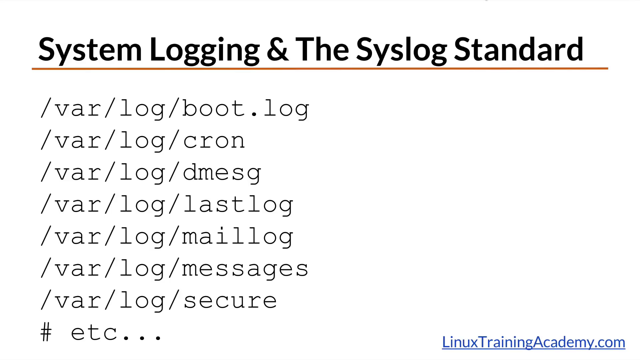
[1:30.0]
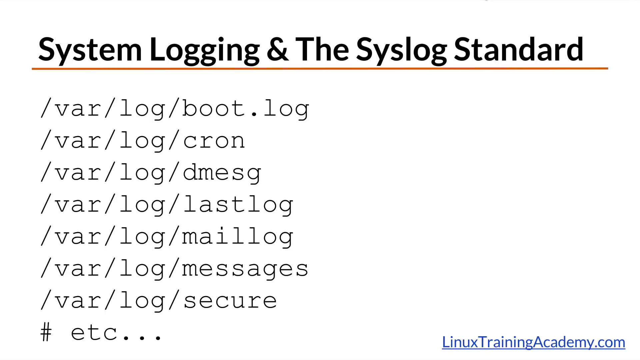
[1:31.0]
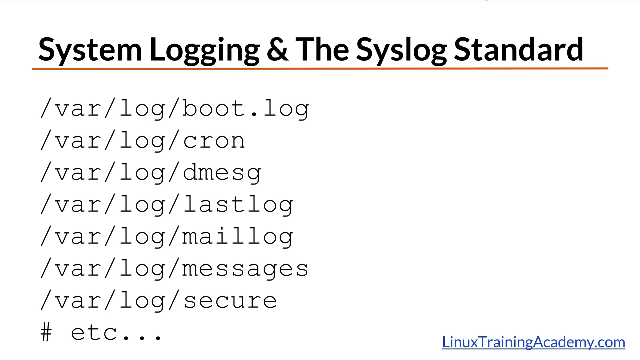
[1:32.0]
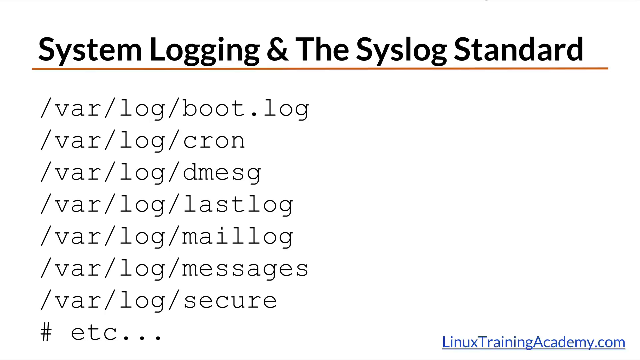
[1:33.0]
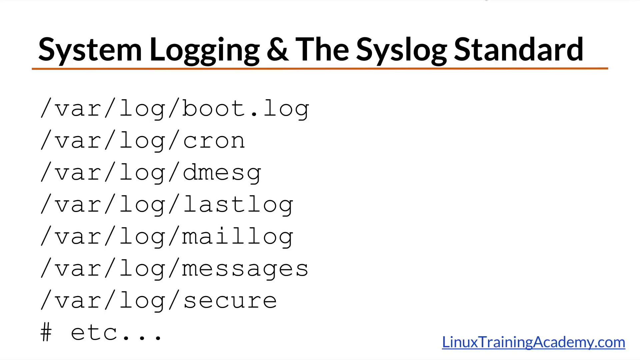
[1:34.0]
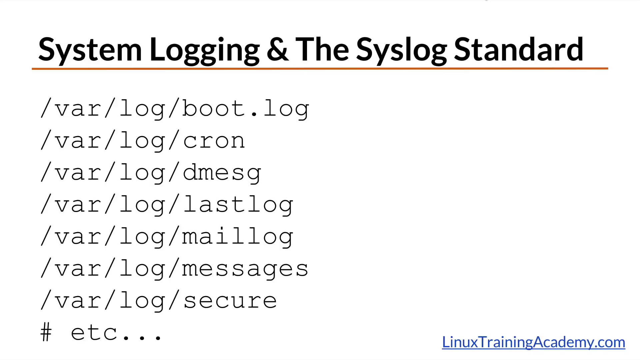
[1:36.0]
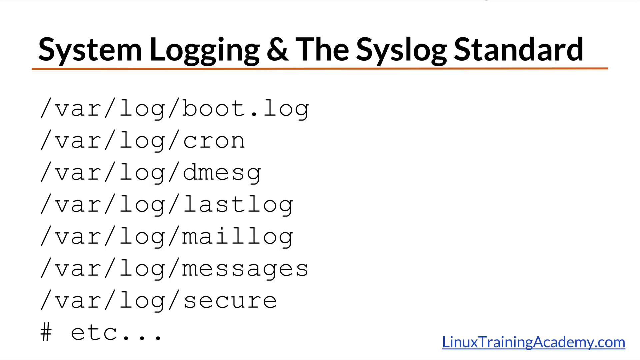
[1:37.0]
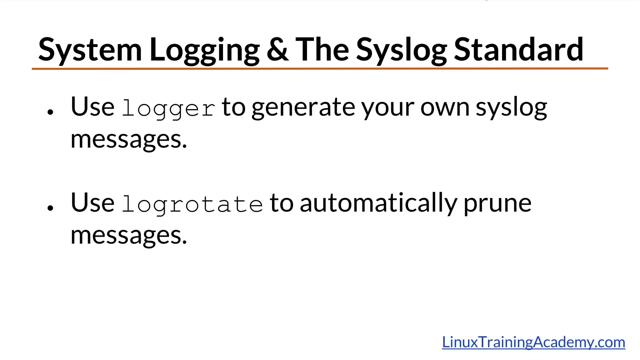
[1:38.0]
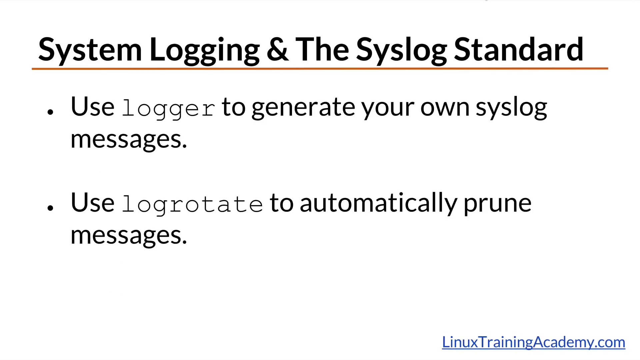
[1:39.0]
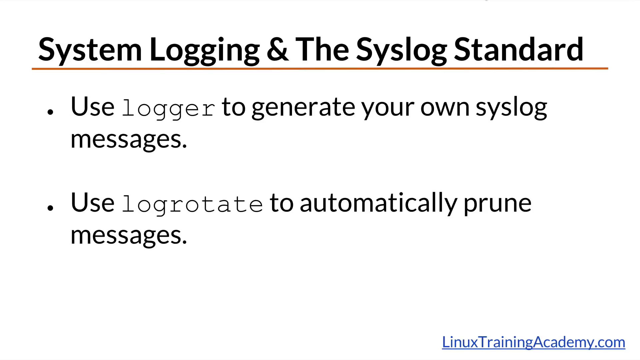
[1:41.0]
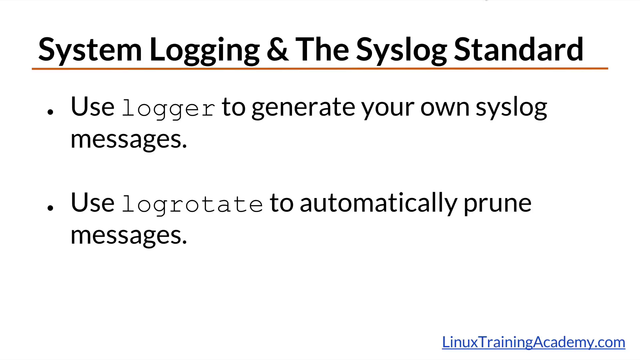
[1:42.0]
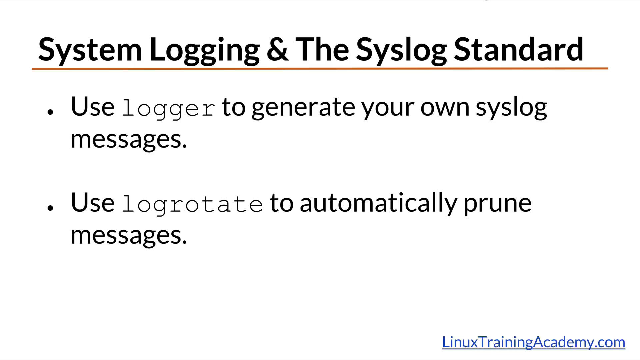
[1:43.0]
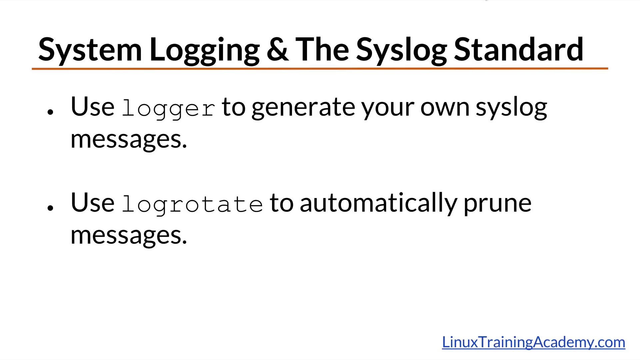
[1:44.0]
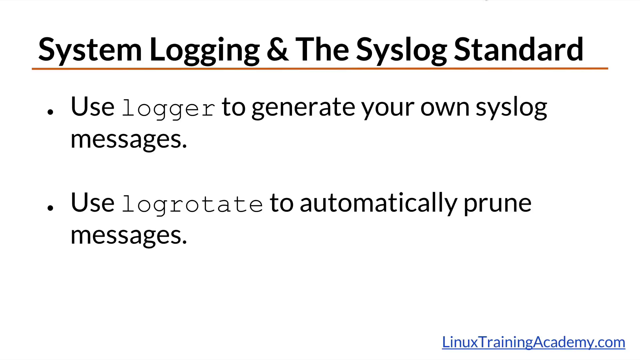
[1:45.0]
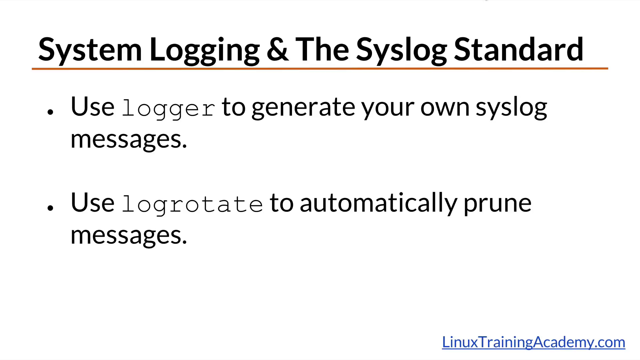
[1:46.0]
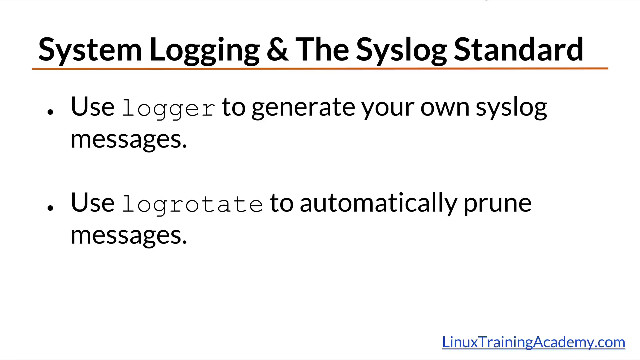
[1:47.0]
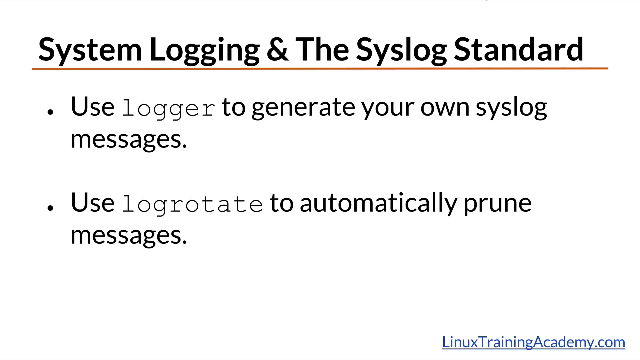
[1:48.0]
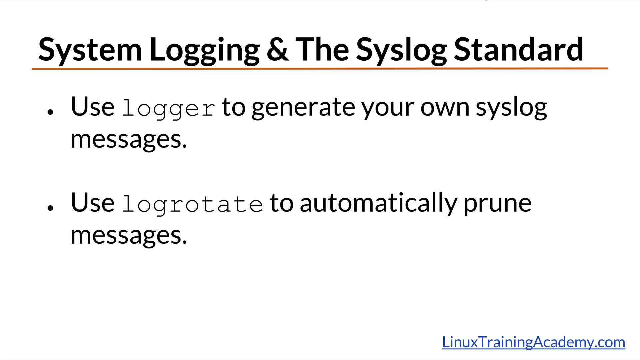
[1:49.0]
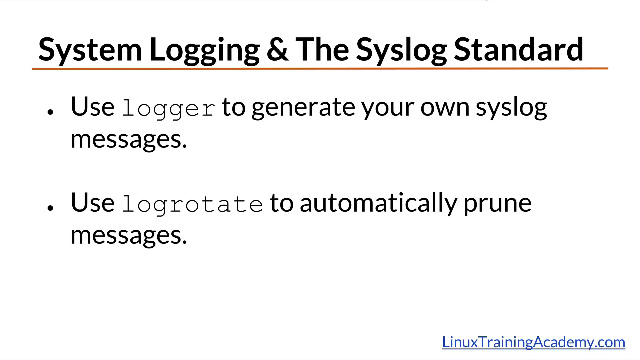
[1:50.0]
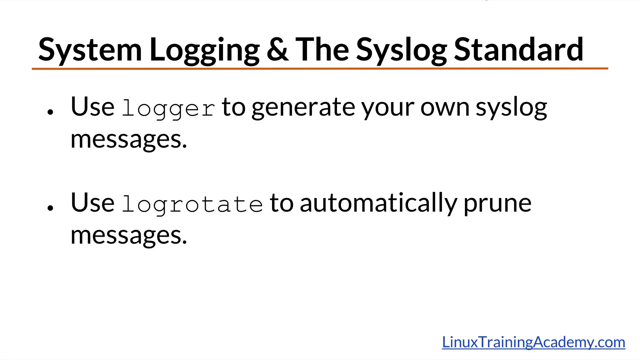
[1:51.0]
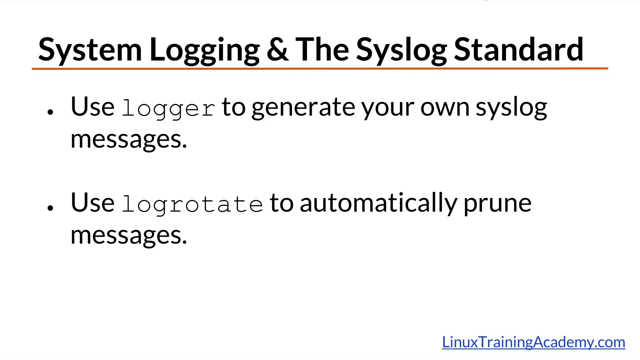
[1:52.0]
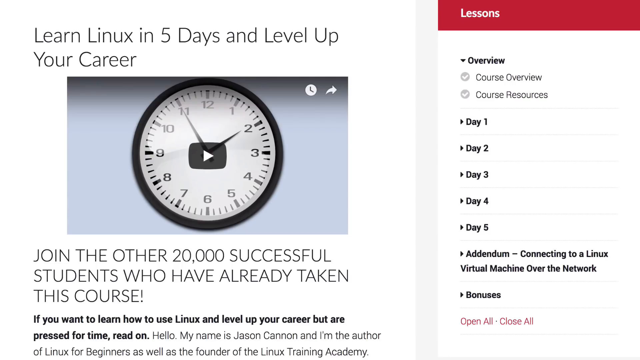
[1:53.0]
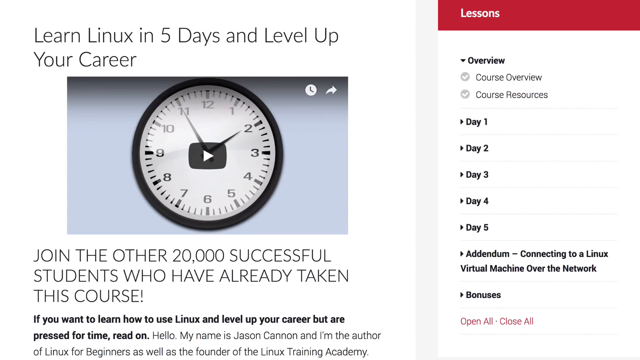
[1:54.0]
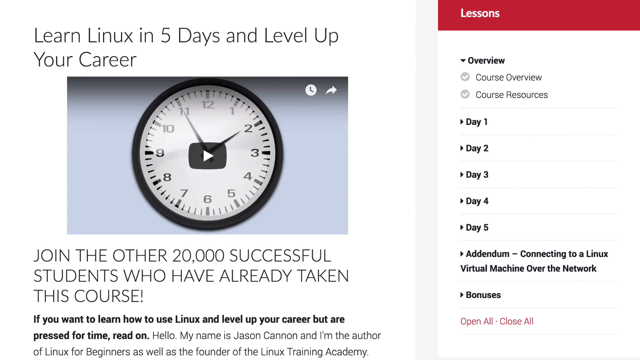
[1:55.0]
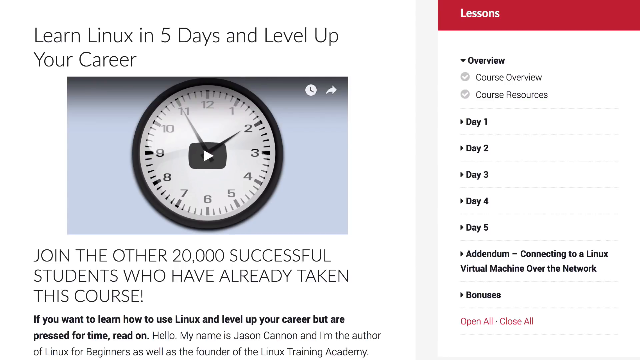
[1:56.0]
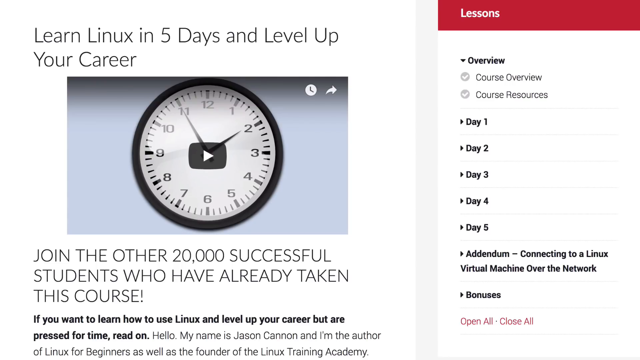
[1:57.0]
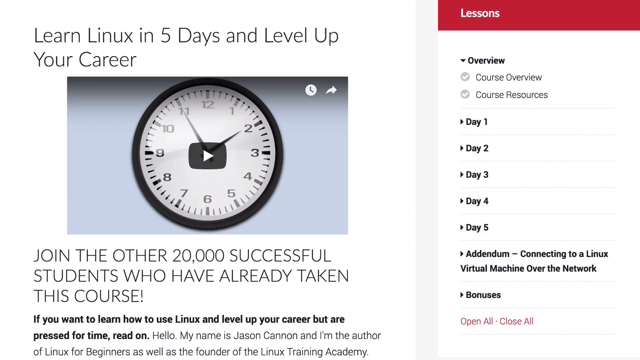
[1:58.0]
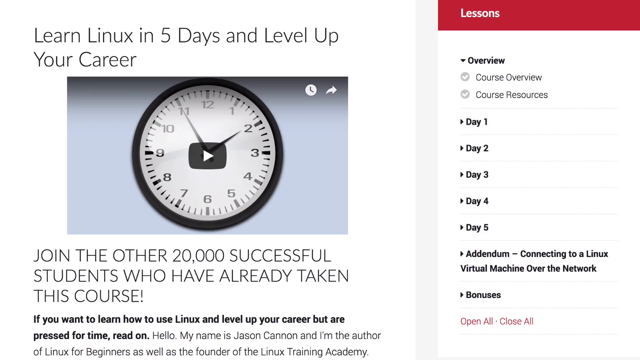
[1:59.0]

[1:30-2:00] The screen reads "Sustainable Logging" and shows various codes, including text about using a logger to send log messages.